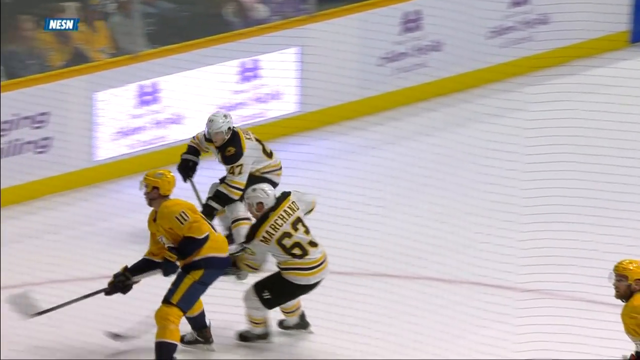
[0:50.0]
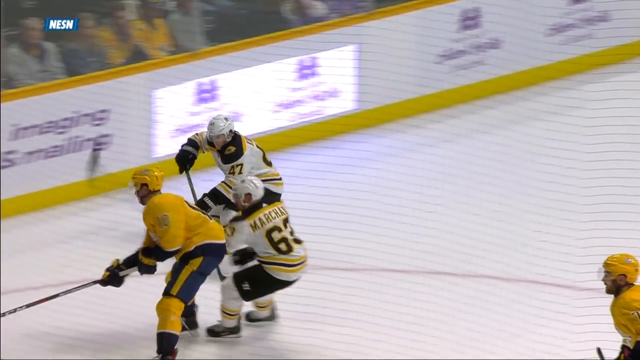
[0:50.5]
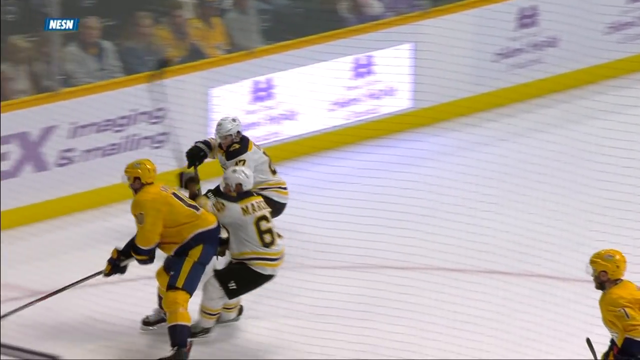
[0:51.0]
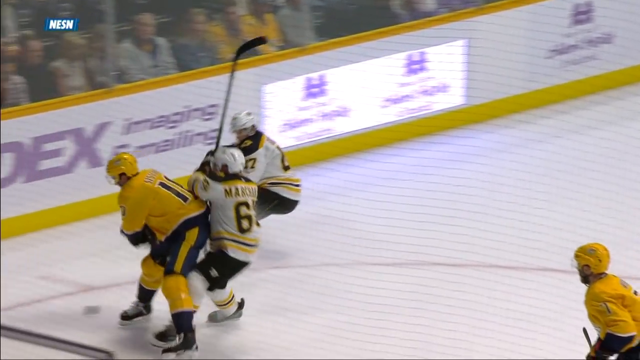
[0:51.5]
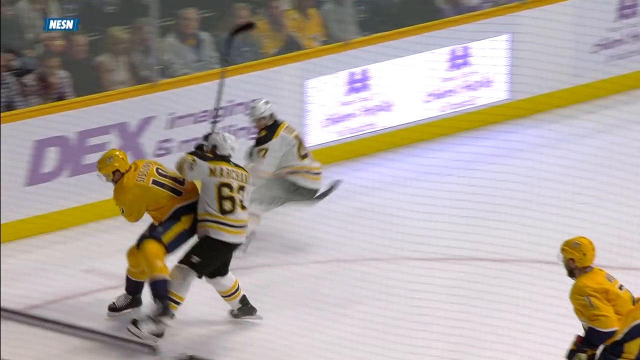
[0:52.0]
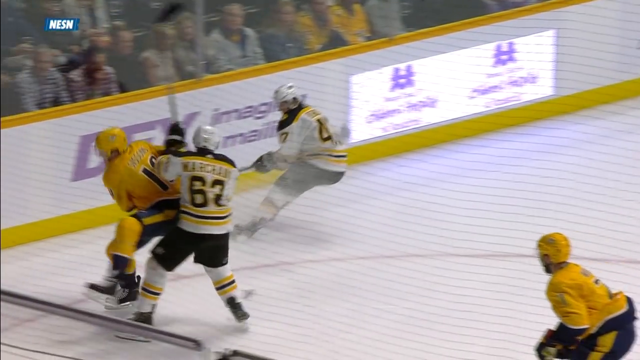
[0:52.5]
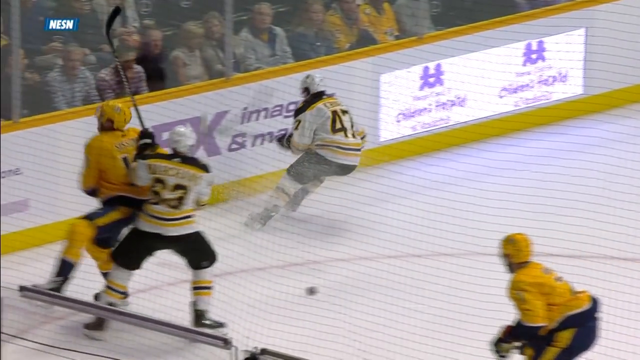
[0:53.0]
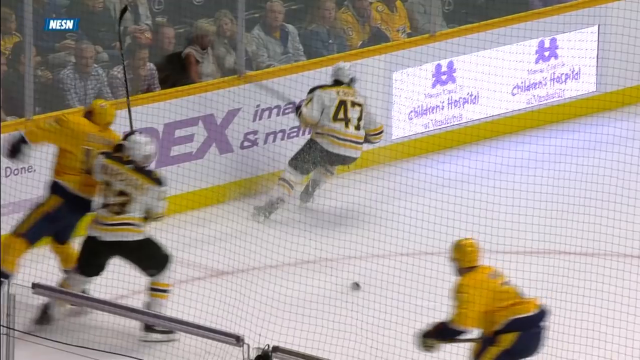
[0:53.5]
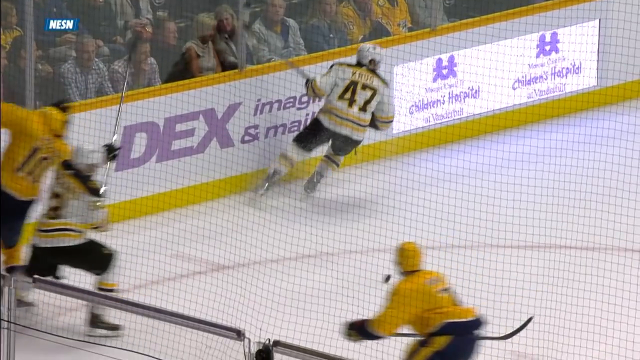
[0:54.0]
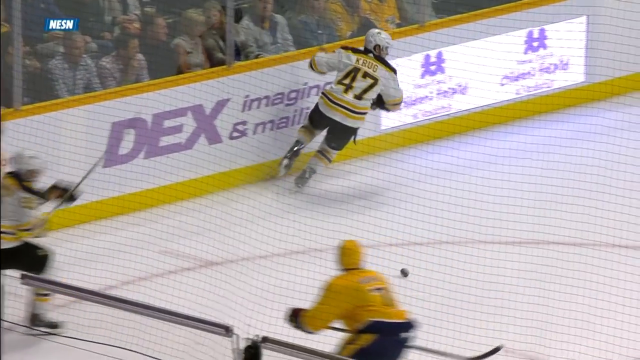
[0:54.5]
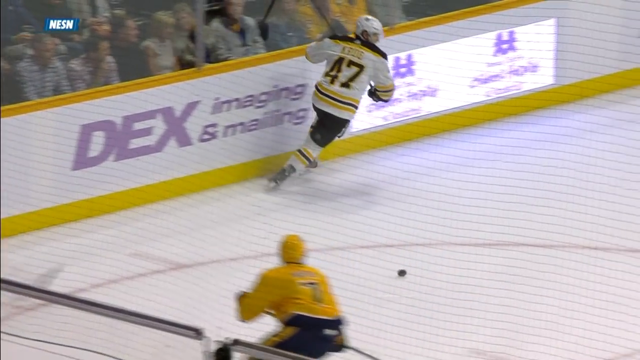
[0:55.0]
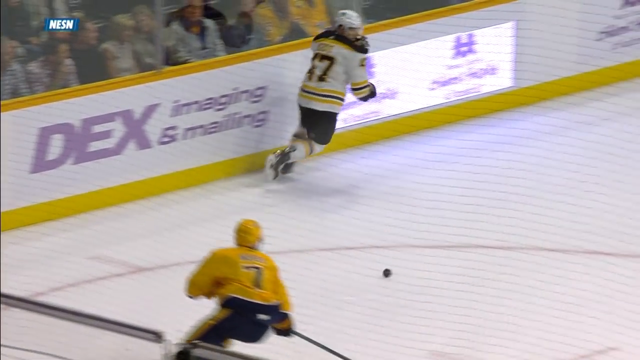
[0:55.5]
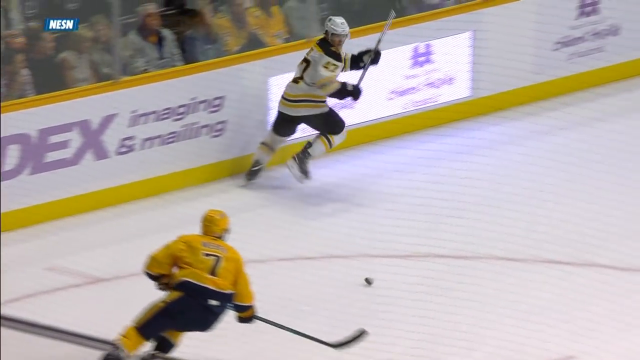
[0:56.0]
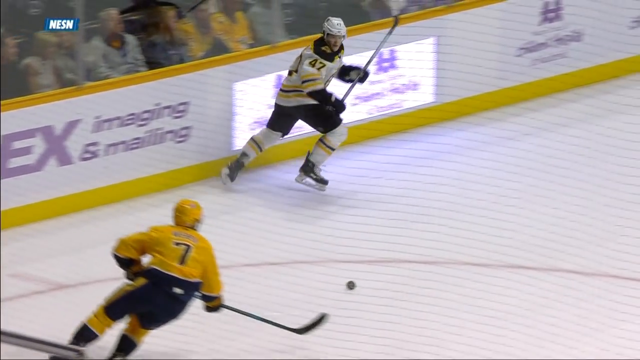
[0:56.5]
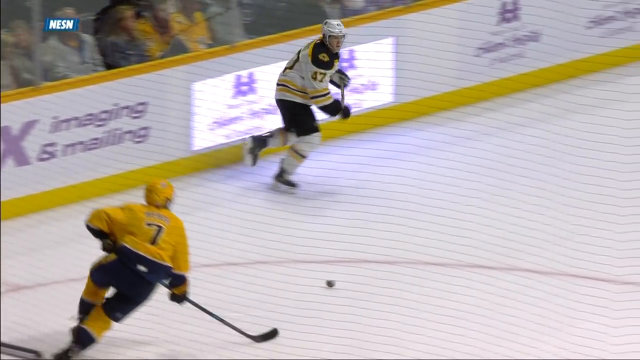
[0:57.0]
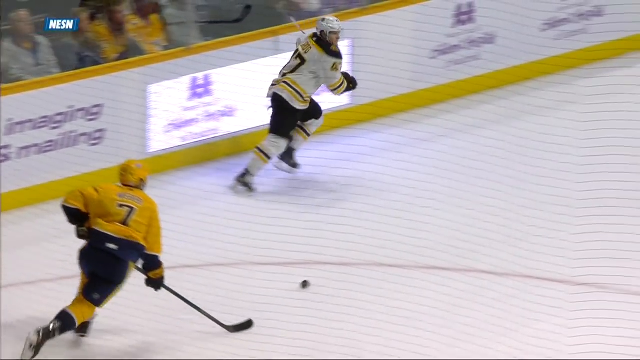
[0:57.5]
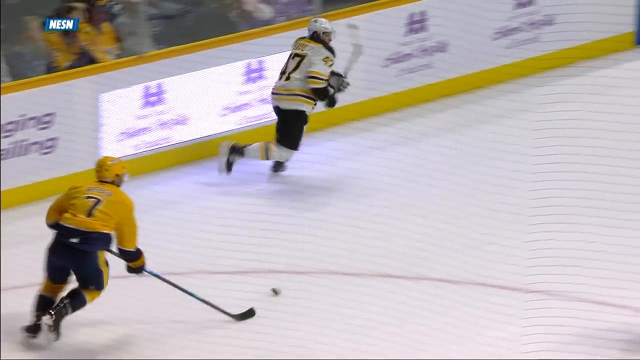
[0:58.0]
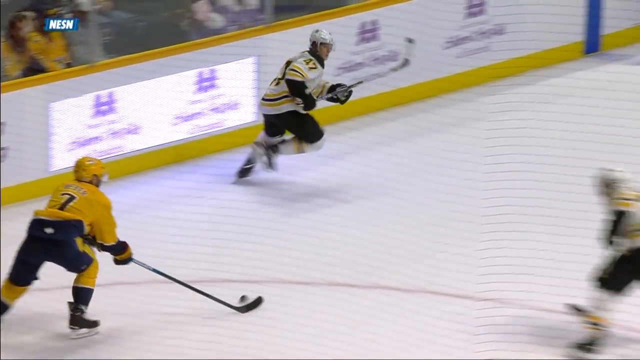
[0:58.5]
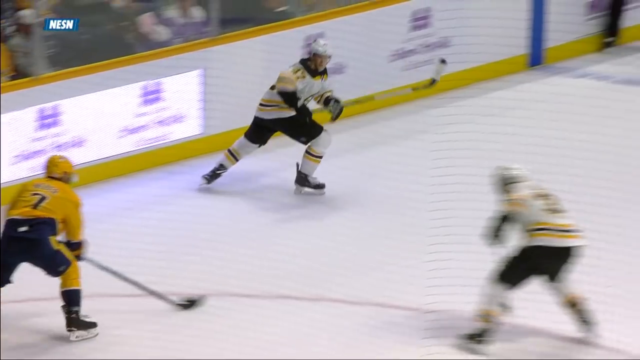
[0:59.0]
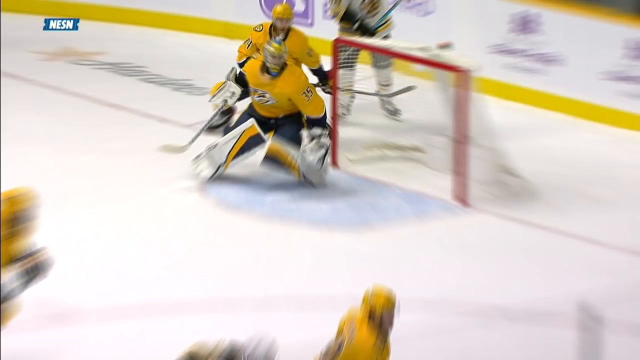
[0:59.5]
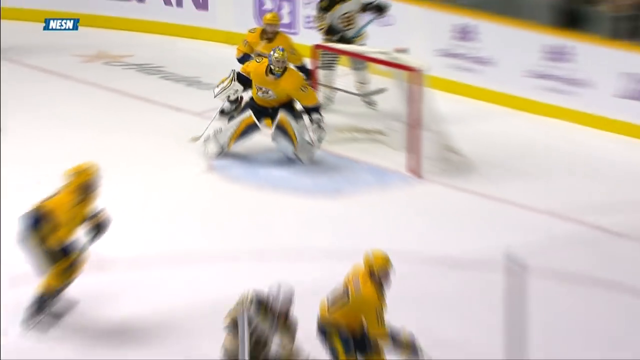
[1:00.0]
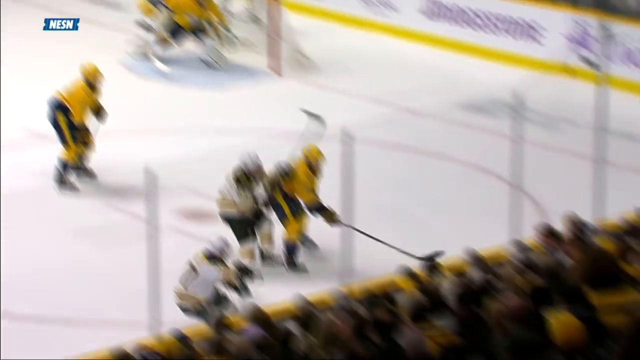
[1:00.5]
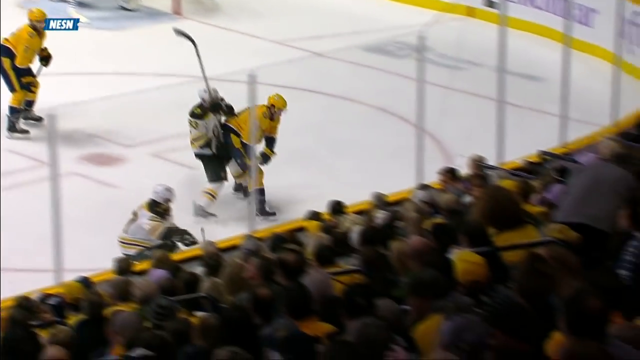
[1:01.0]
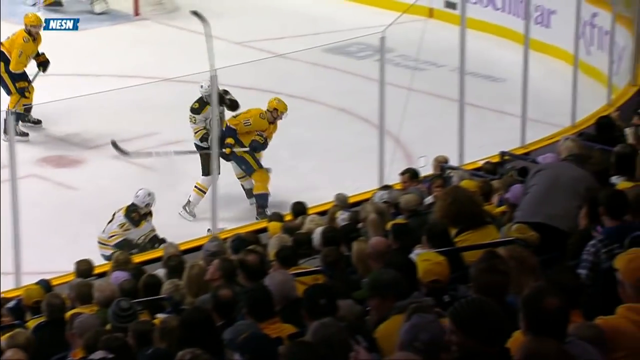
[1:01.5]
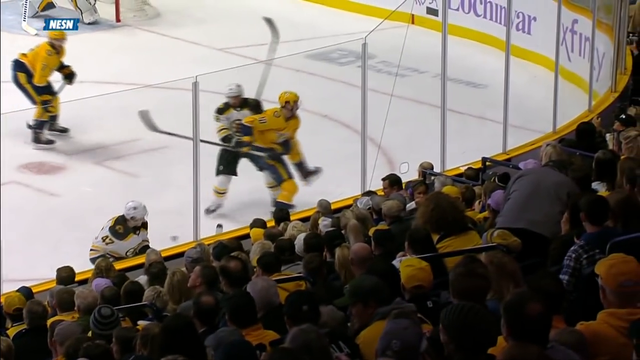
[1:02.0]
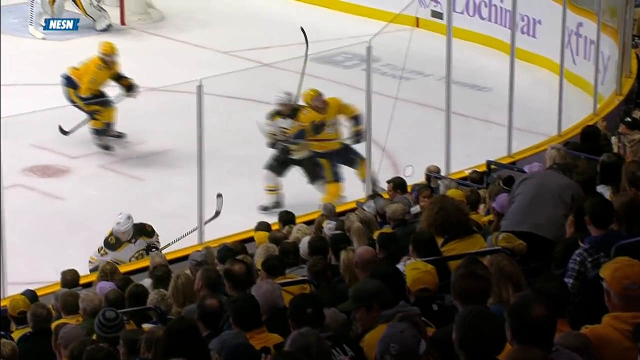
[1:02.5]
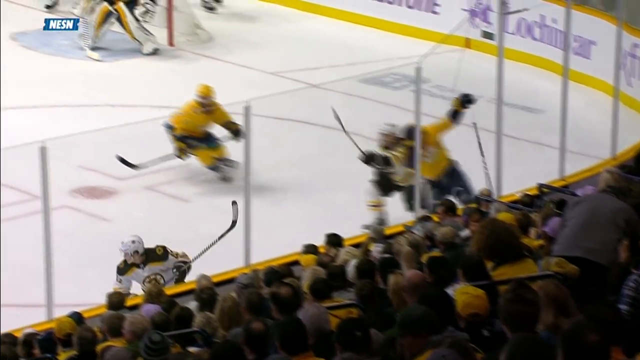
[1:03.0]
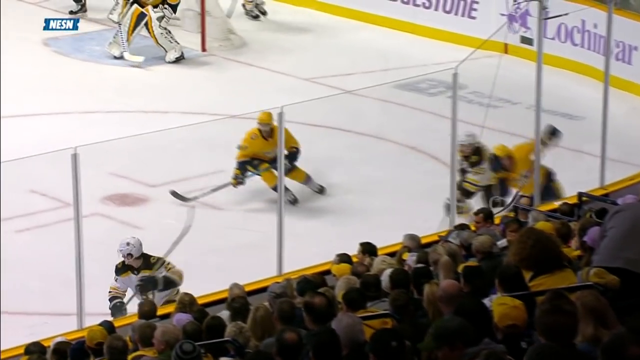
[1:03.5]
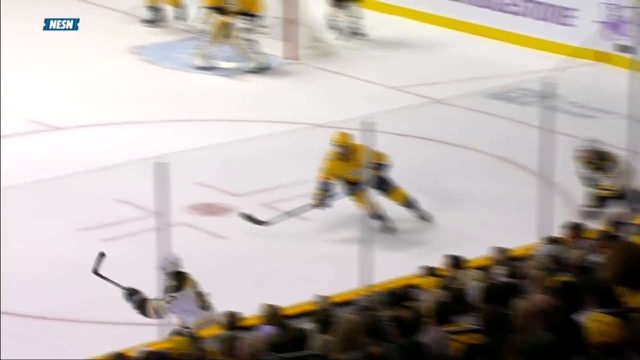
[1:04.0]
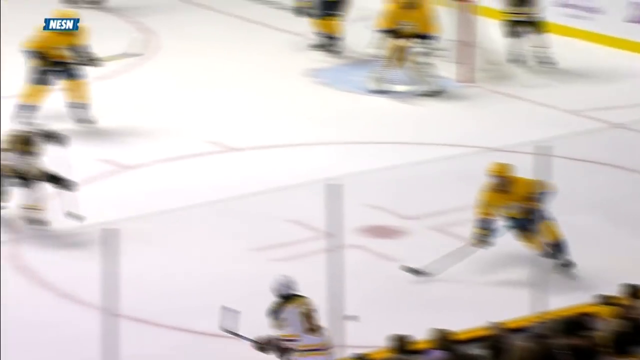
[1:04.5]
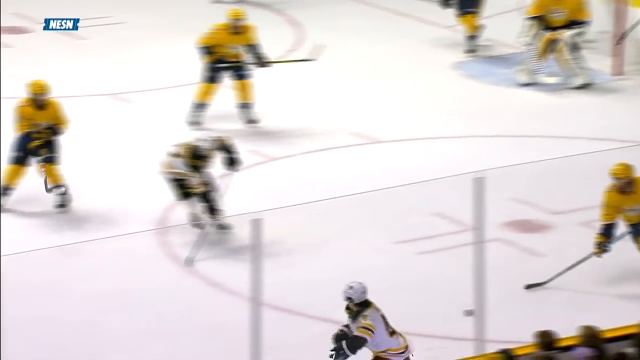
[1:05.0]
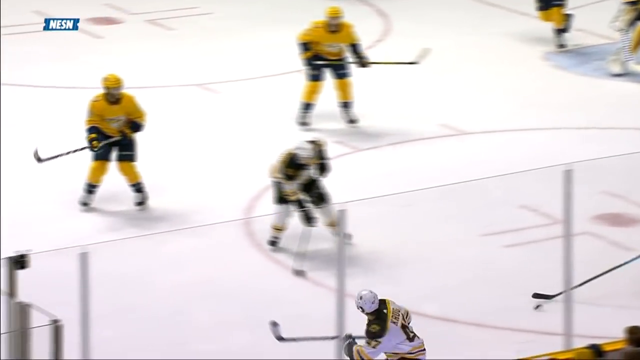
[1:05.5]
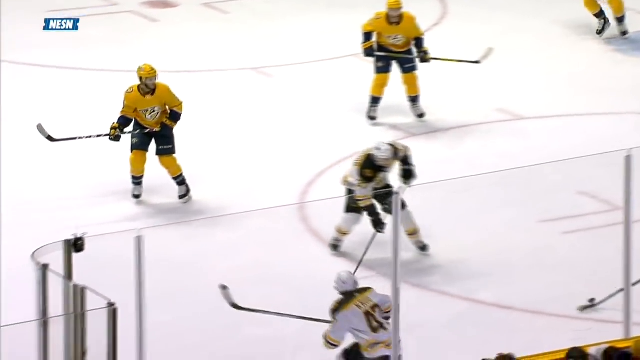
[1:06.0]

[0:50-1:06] A replay shows what happened, though it is hard to tell exactly. Two players from the white team skate after a player on the yellow team, and they appear to bump into each other; the puck goes flying in the middle and someone regains control of it. Player 63, who was sent back to the box, appears to slide his body into the yellow player and maybe pushes him so he cannot get to the puck, and he possibly taps him on the helmet with his hockey stick as well. The replay is filmed fairly close up, and more logos are visible on the white wall around the rink, such as Bridgestone and DEX. The white wall has yellow trim at its base and along its top.